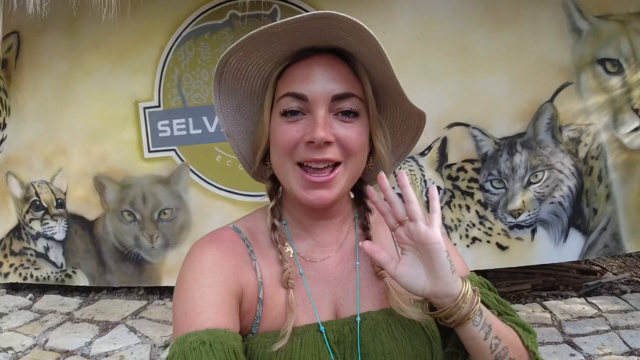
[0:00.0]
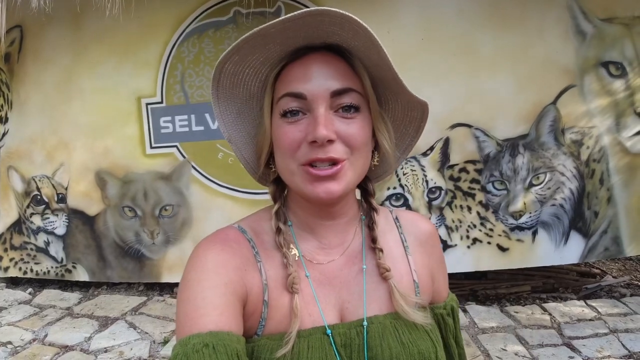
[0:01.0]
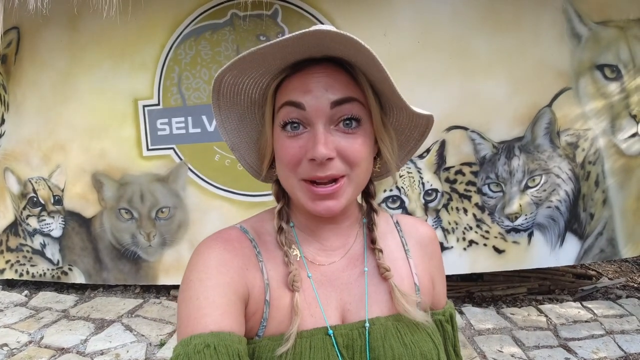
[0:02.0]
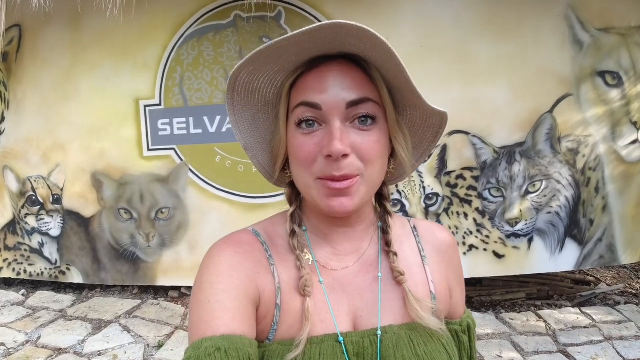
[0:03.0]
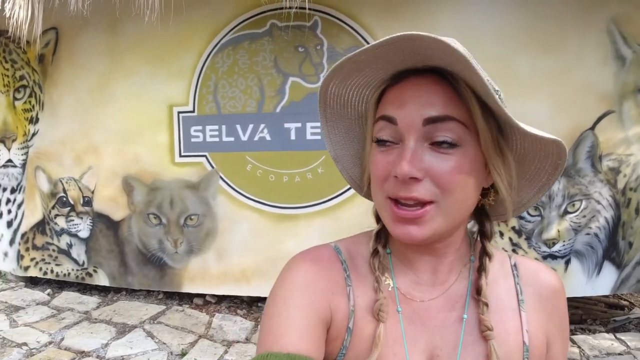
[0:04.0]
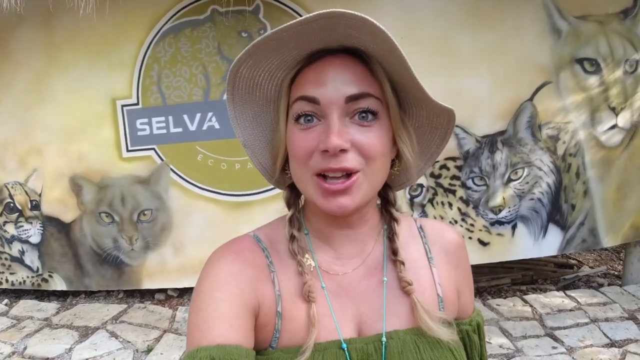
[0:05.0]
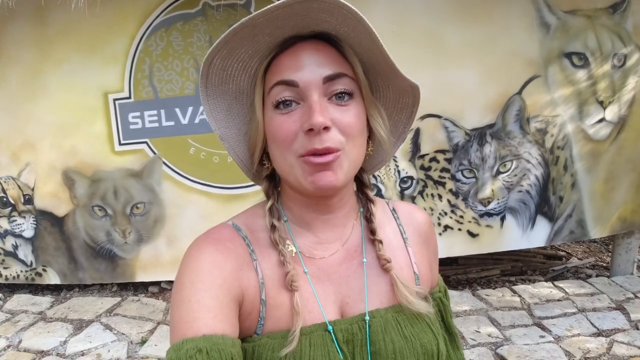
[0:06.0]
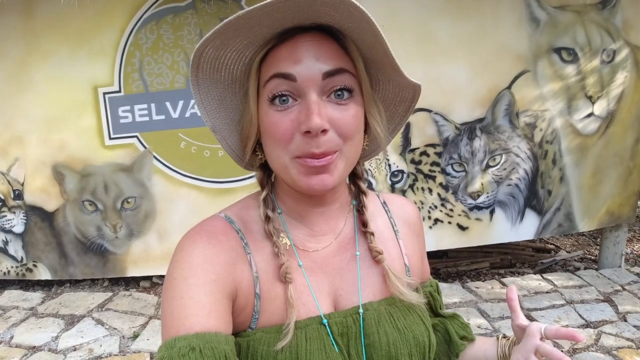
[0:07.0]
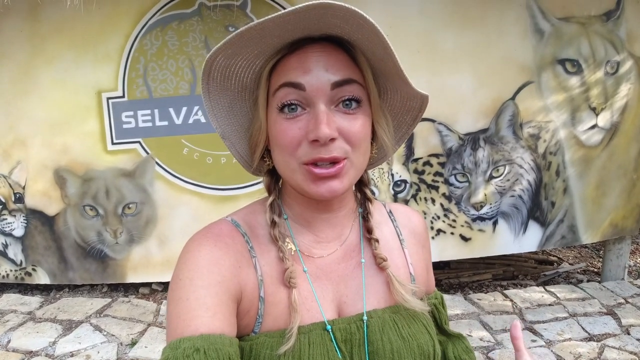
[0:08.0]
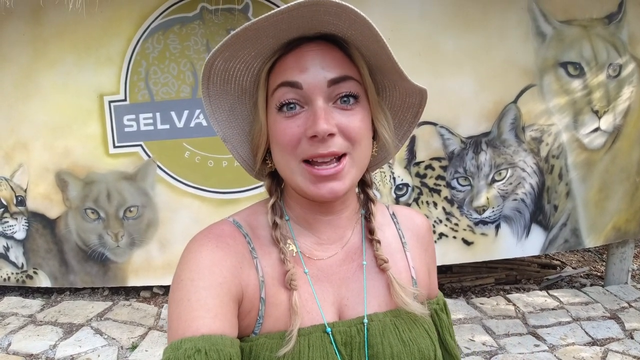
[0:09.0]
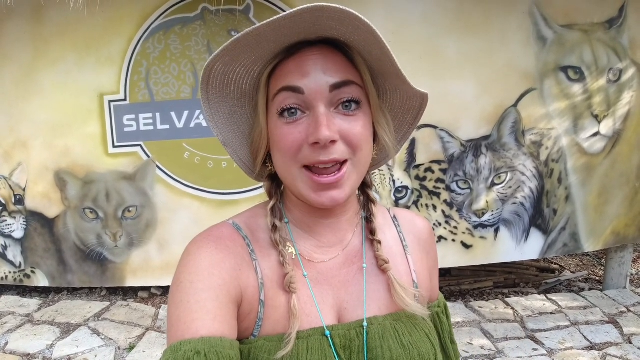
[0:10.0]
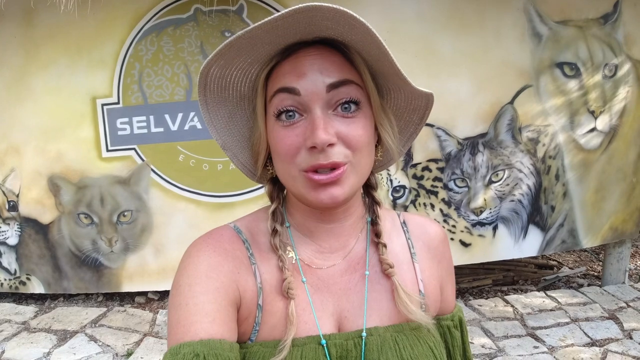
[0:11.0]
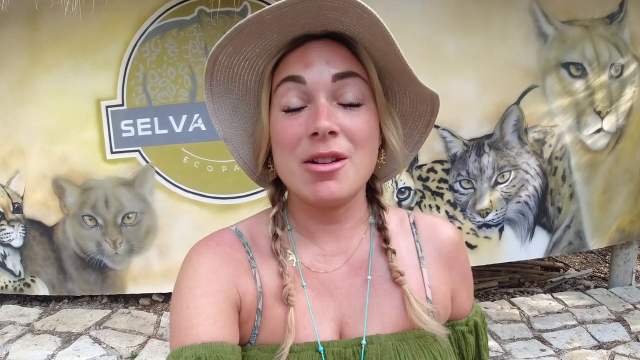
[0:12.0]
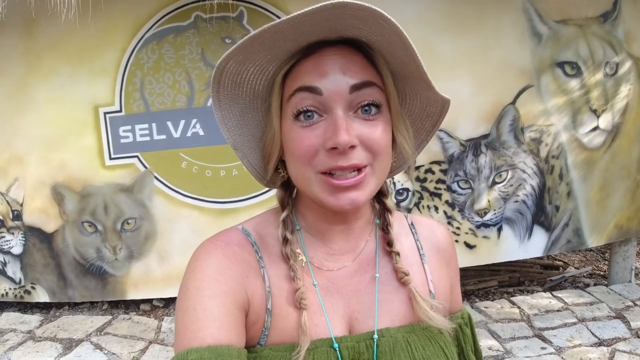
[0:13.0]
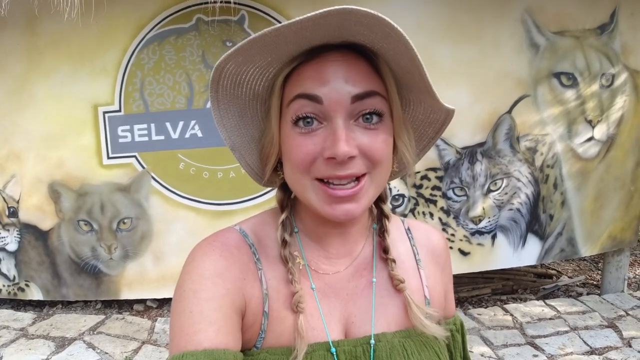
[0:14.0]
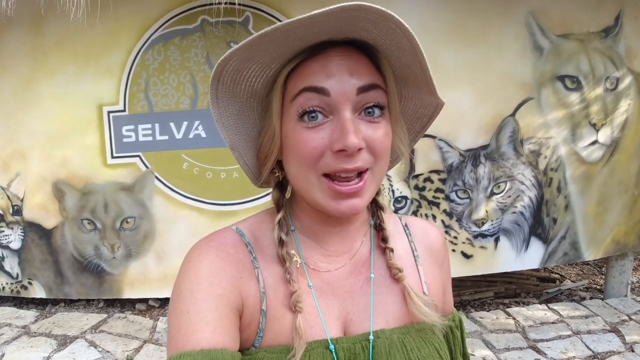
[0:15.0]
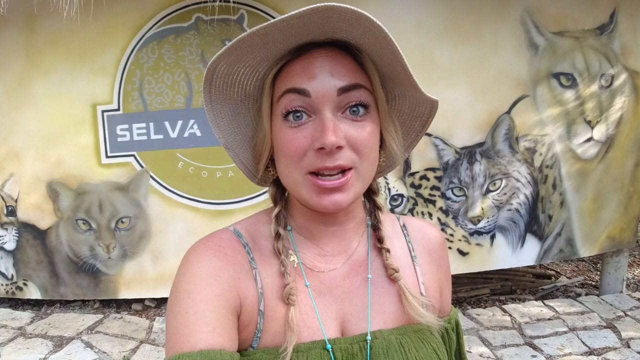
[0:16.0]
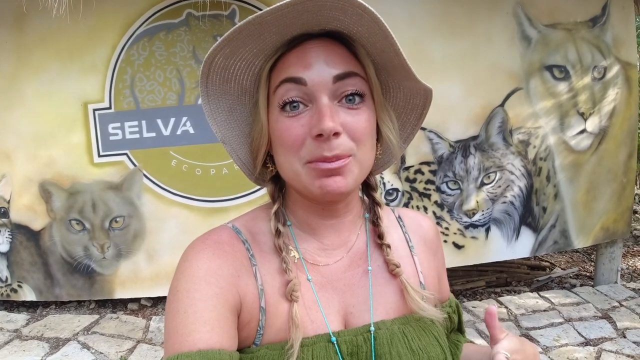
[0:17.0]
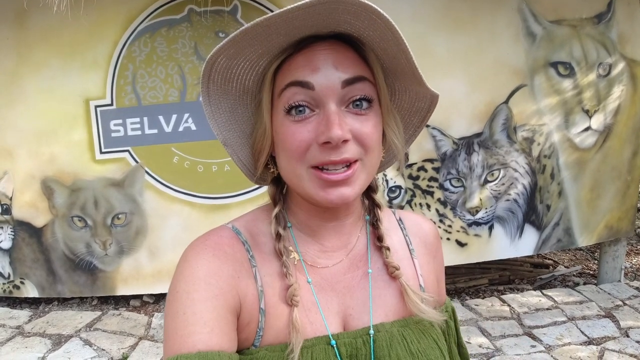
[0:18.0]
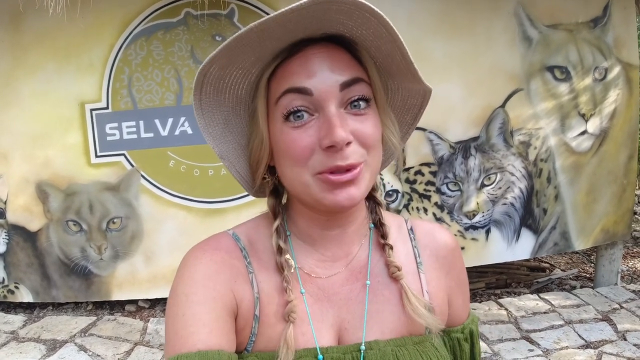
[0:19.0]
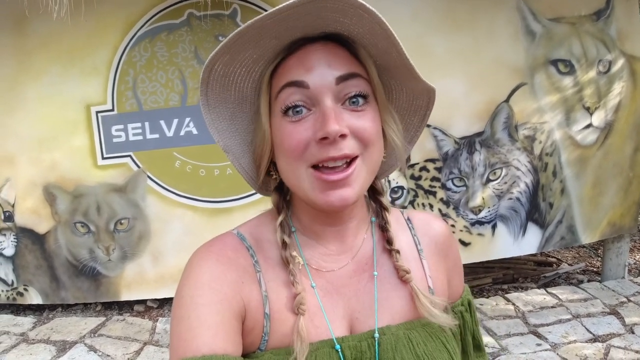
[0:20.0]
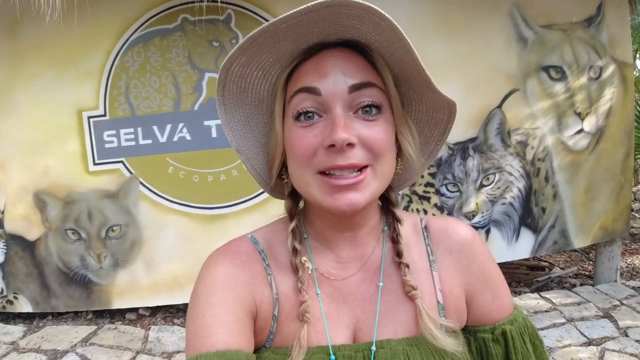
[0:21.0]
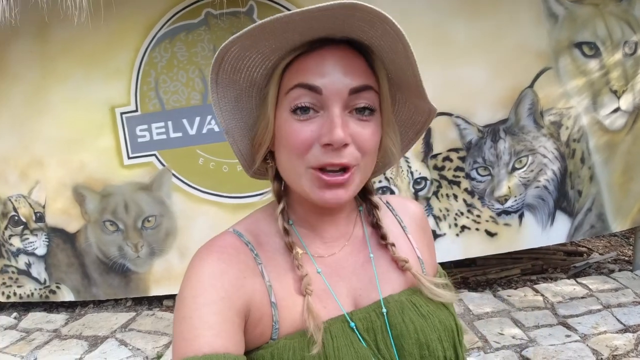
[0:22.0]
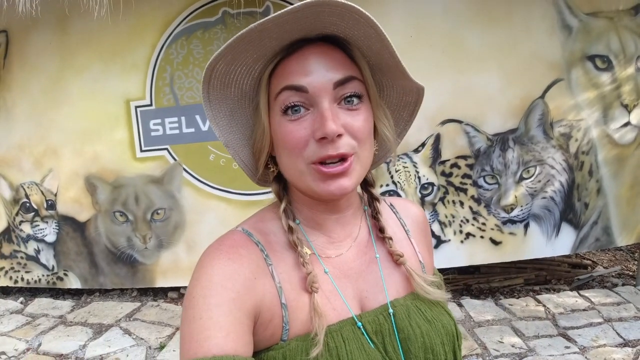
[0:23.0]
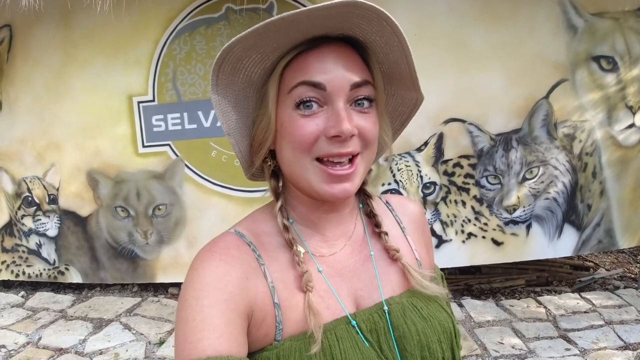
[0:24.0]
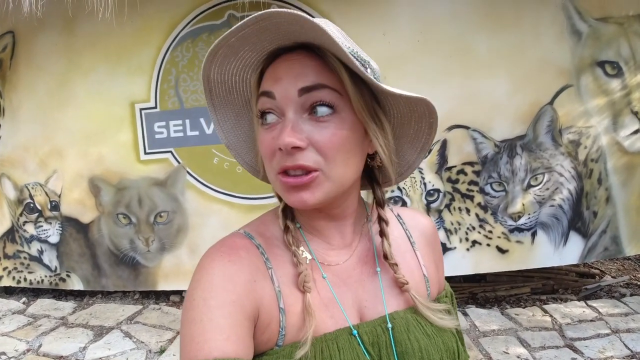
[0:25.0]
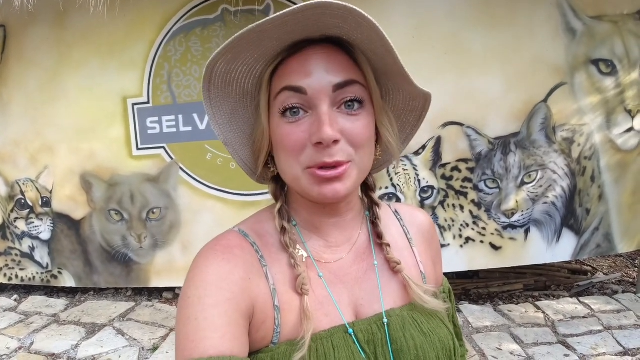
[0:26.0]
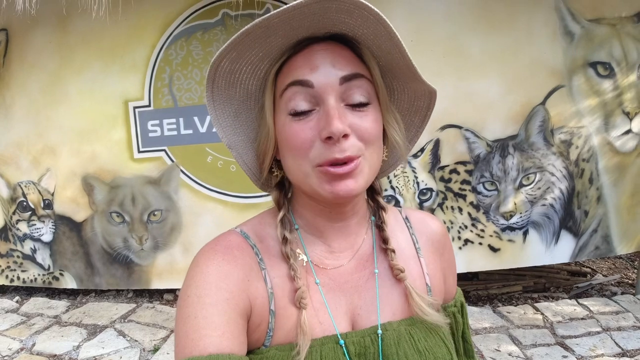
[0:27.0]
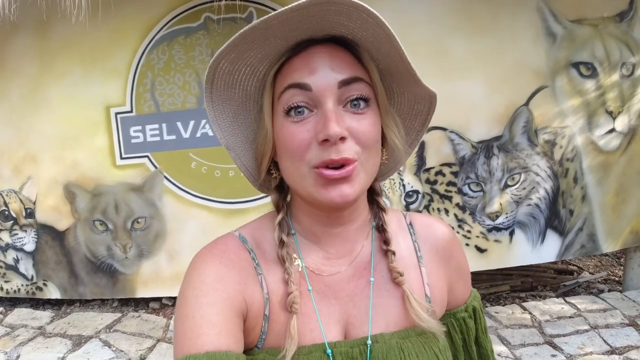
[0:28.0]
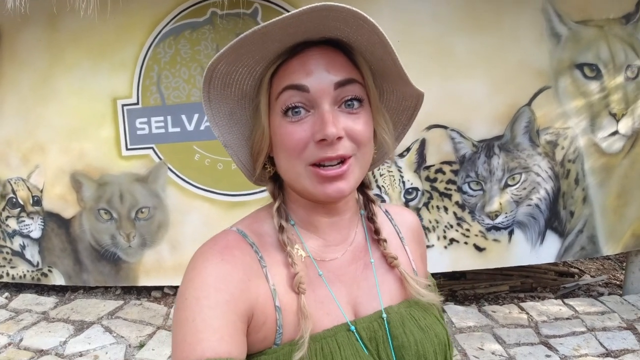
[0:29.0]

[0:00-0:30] A woman wearing a sun hat waves her hand. Behind her, artwork of cats is drawn on the wall where she is standing. She is dressed in a skirt with a top and talks in front of the camera, facing it directly and at times looking sideways, as she takes the video and gestures with her hands while describing something. She keeps looking at the camera and talking while facing the front of it.